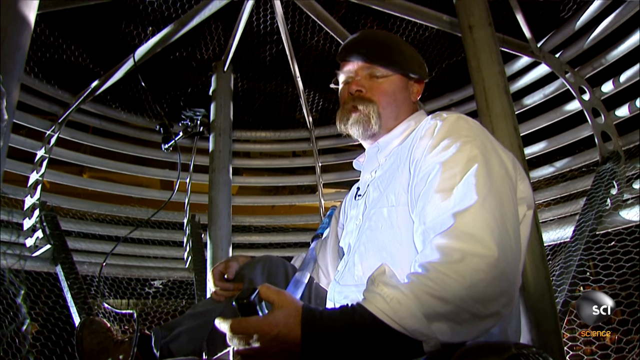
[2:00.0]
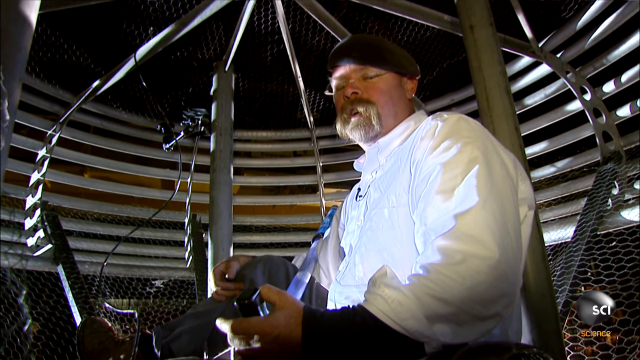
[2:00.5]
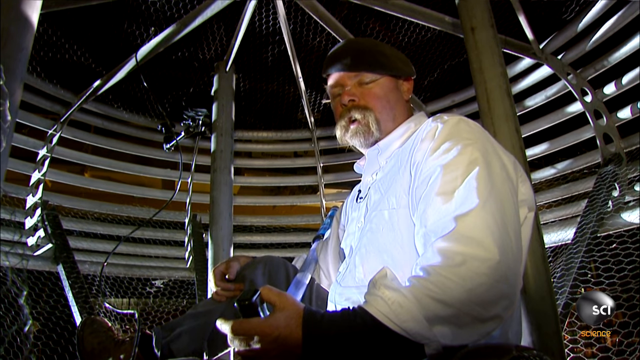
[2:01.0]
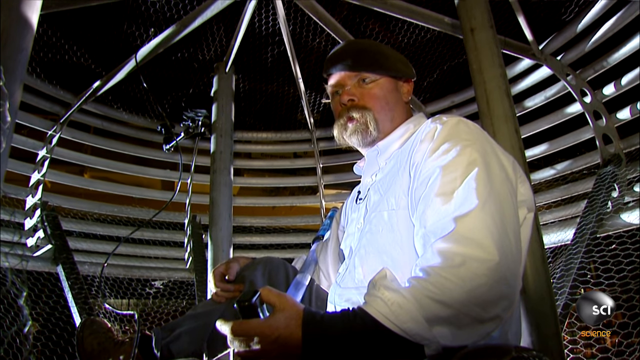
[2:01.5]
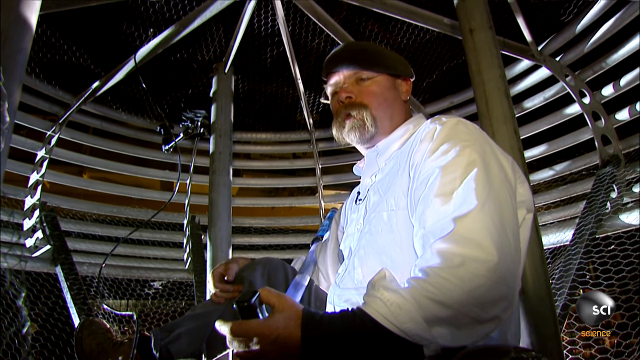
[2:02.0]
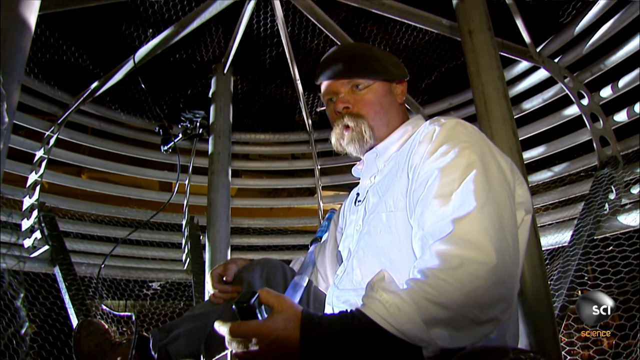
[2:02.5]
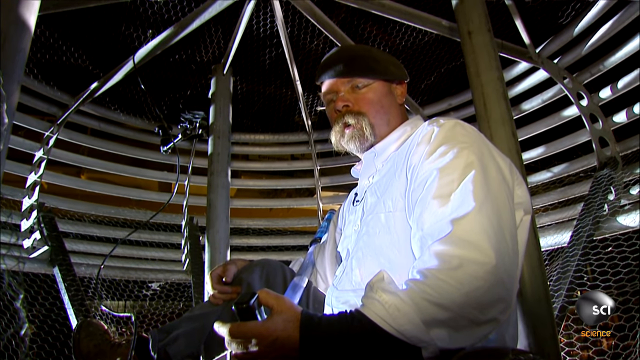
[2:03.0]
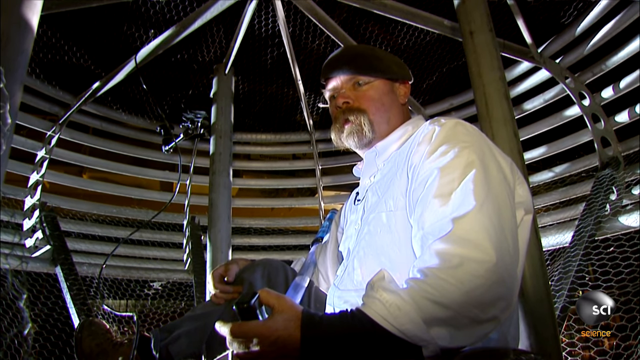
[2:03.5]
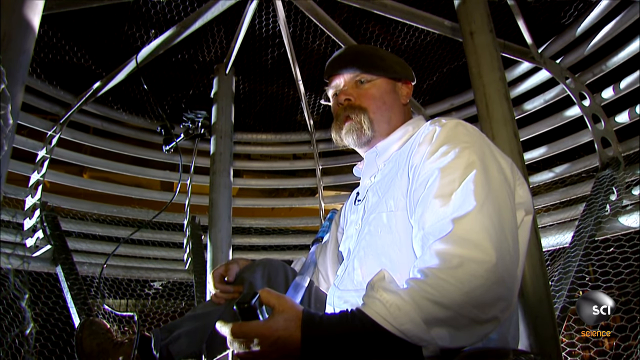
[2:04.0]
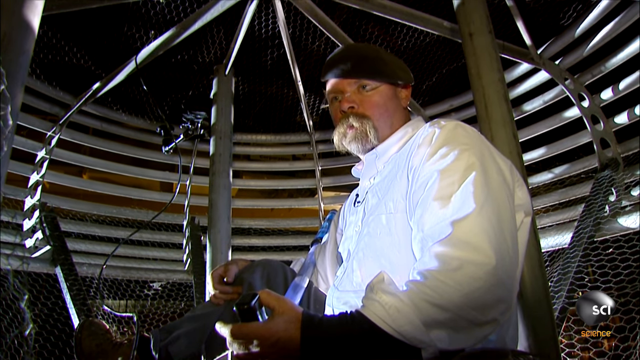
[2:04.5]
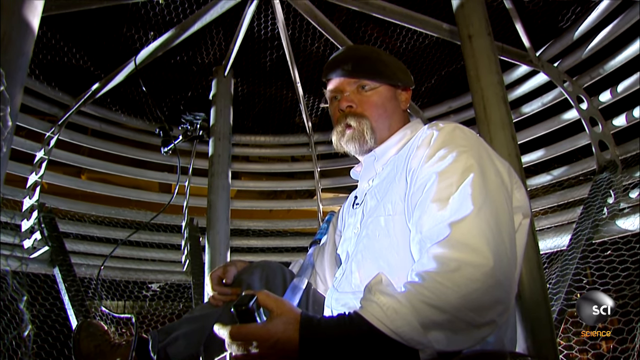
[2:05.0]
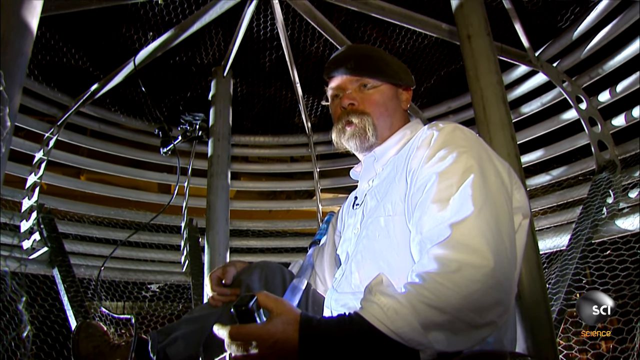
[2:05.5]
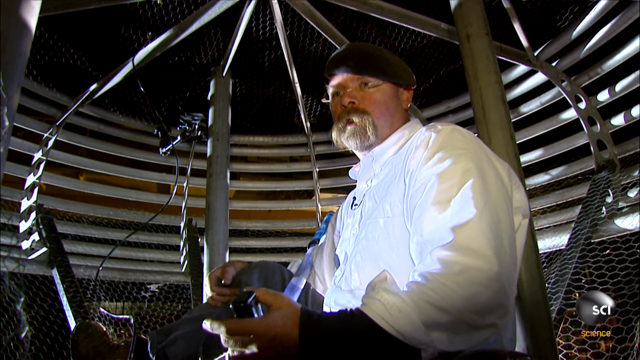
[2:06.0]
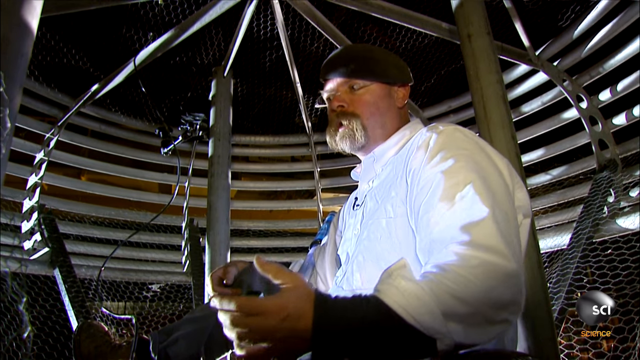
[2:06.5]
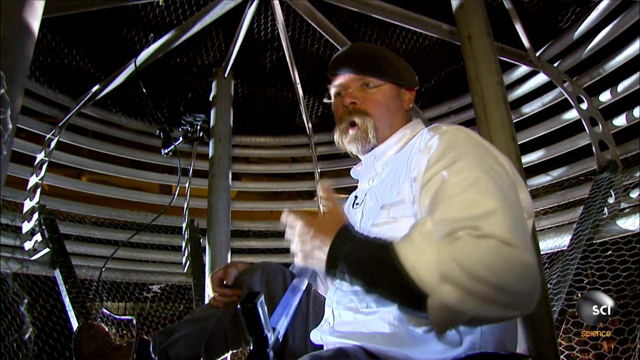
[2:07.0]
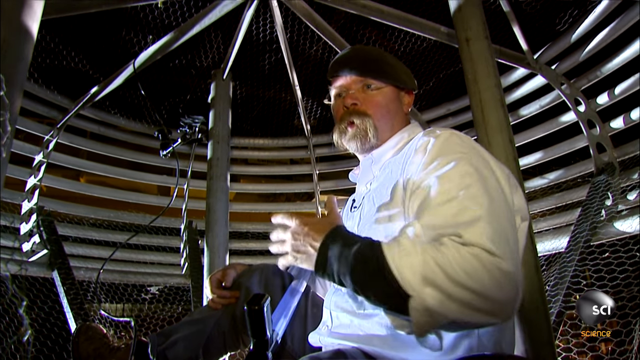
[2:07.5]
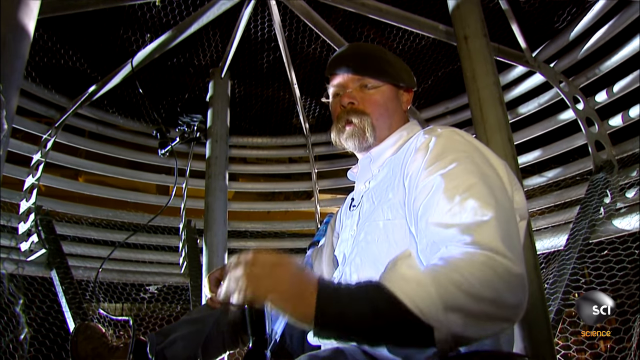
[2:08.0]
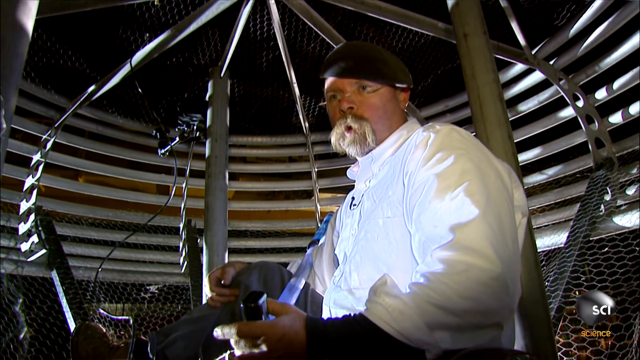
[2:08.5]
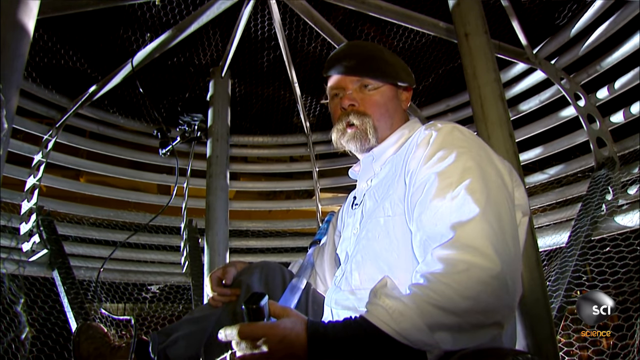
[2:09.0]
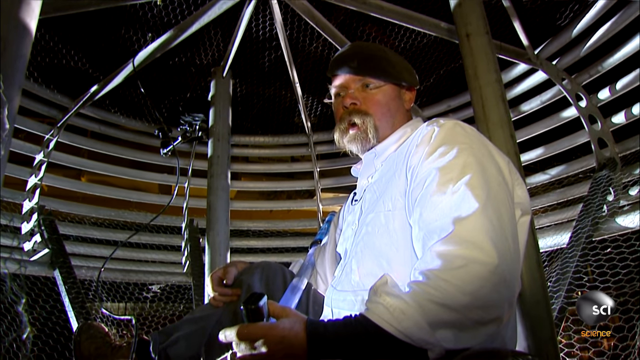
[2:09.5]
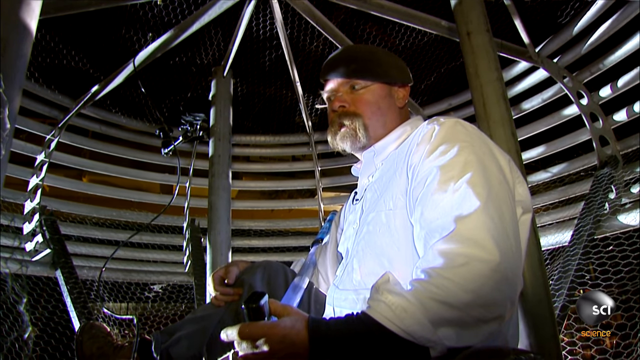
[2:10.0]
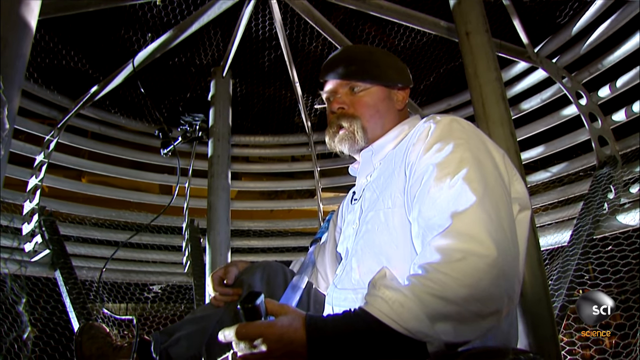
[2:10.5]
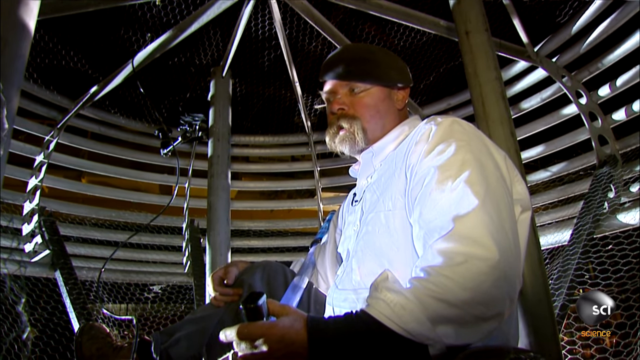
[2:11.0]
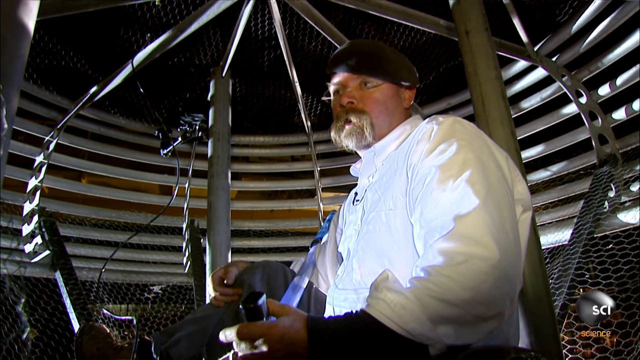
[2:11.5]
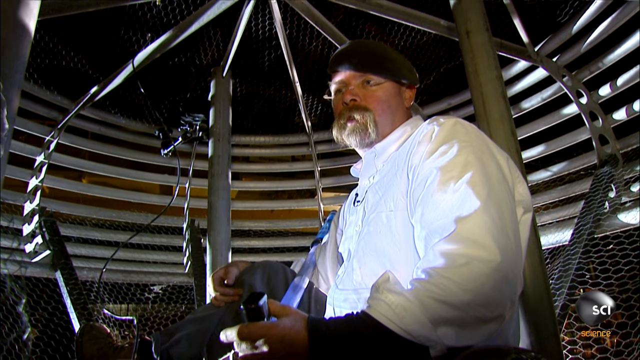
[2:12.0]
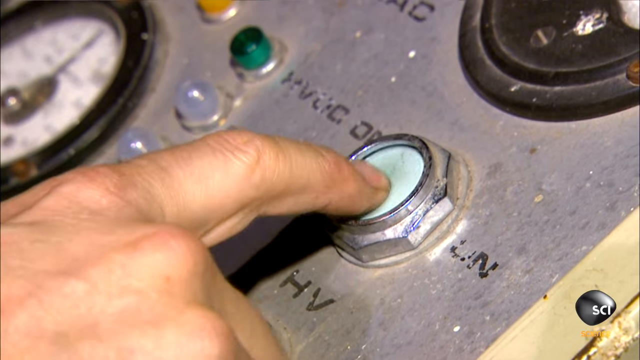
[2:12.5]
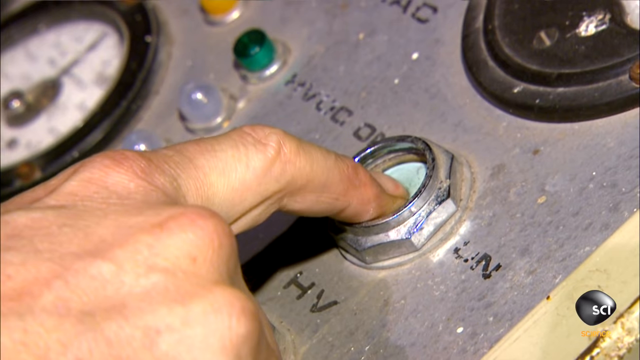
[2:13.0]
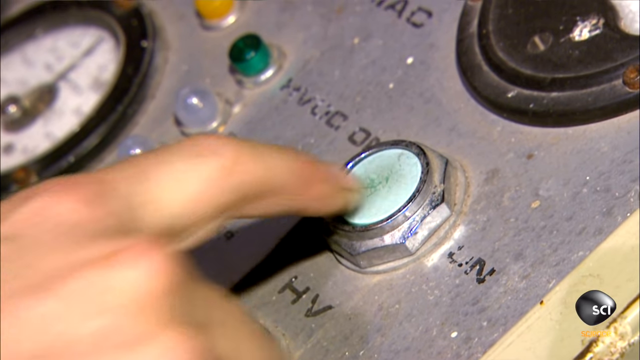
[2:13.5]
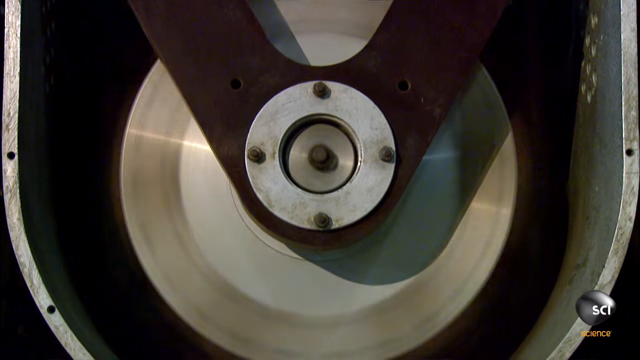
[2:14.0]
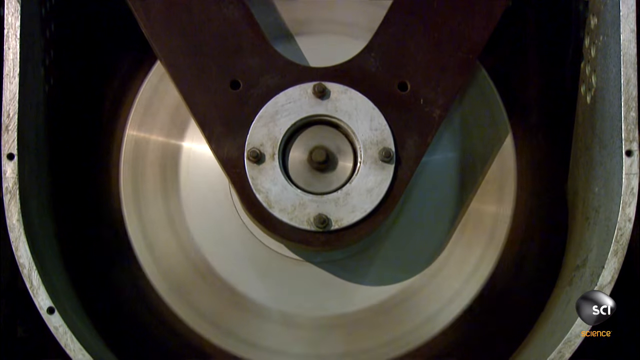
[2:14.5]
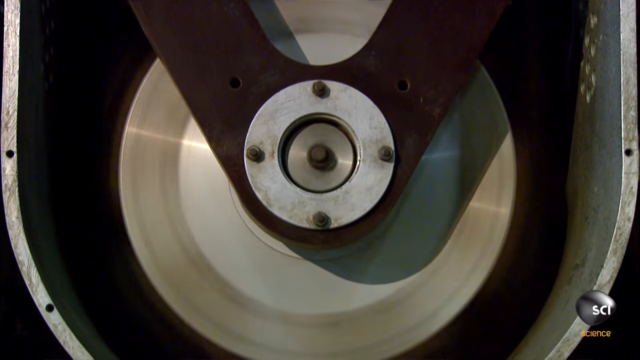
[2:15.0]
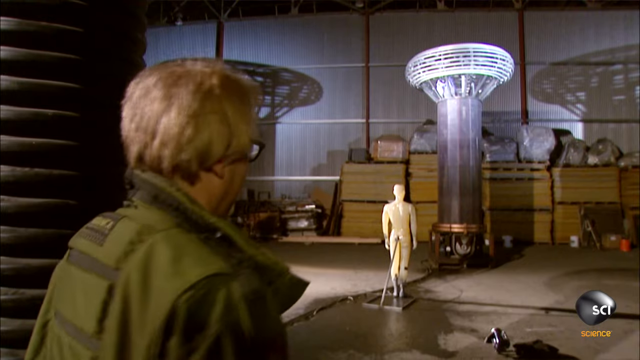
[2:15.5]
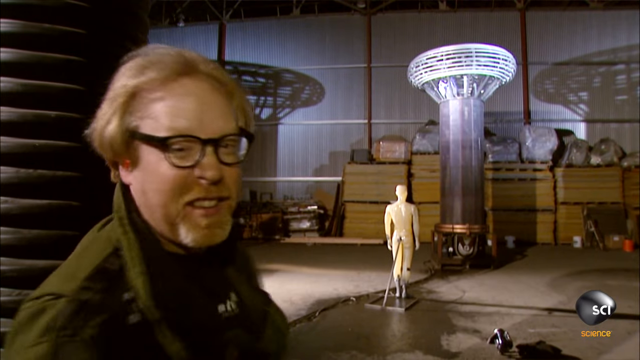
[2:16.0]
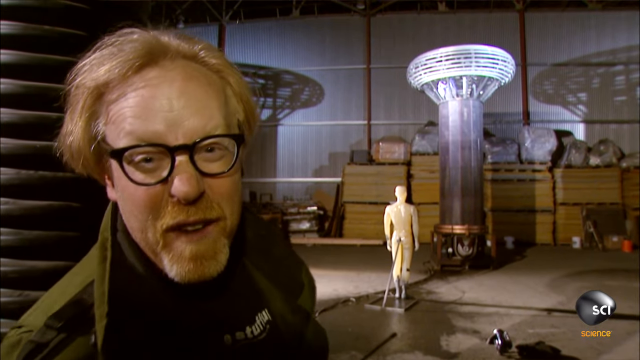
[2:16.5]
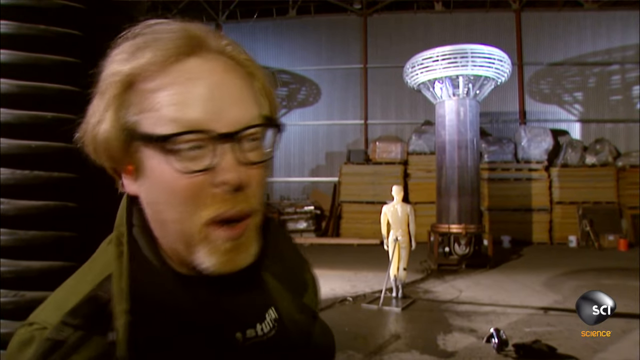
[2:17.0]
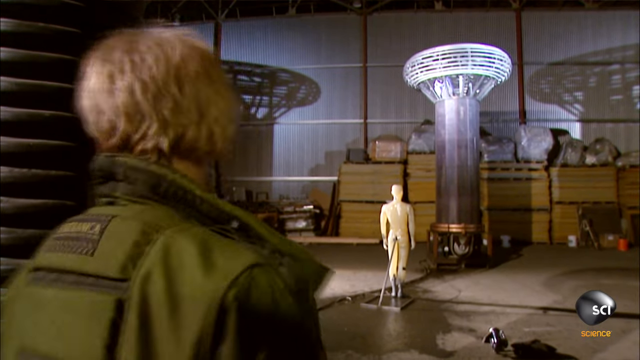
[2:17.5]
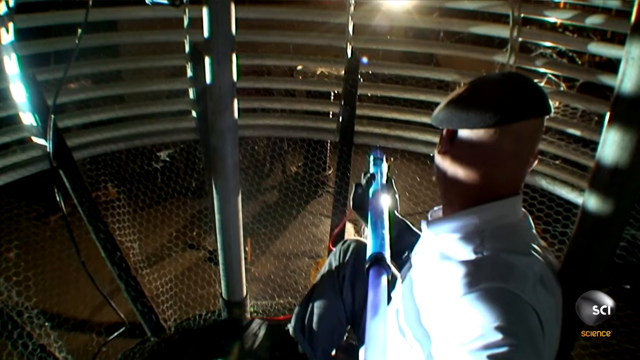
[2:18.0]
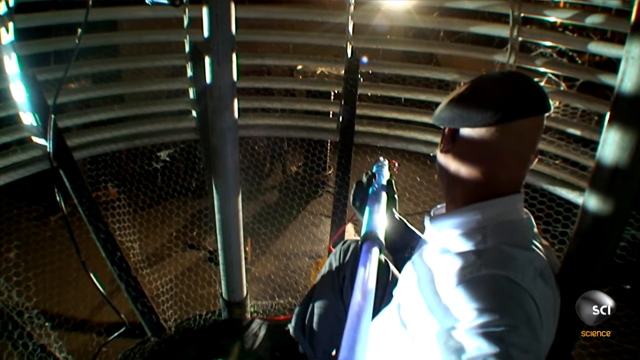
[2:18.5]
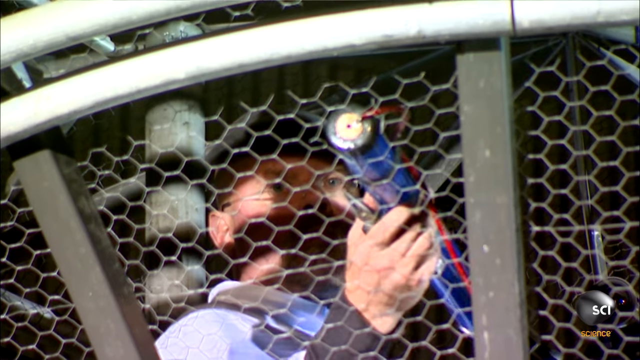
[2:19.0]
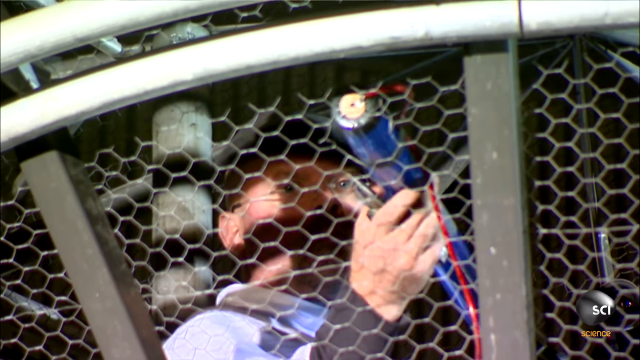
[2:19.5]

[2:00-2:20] Jamie sits inside the Tesla coil holding a push squirt gun and talks. The other man is very excited and turns to the camera. Jamie pushes the squirt gun out right at the chicken wire. A green button is pushed, the Tesla coil starts up, and Jamie gets the squirt gun ready to shoot at the mannequin.